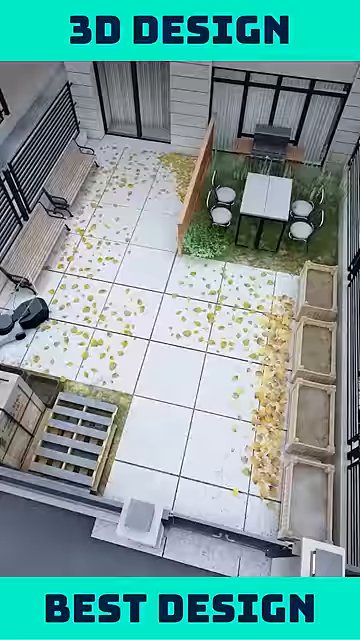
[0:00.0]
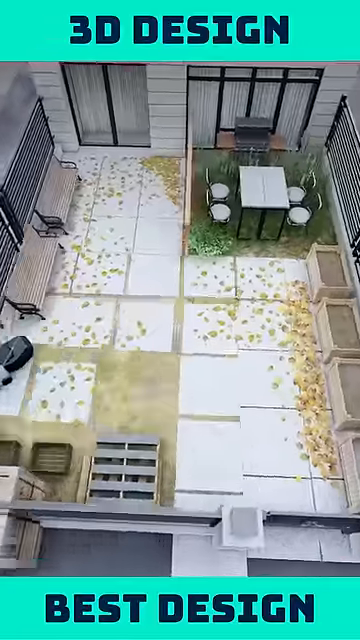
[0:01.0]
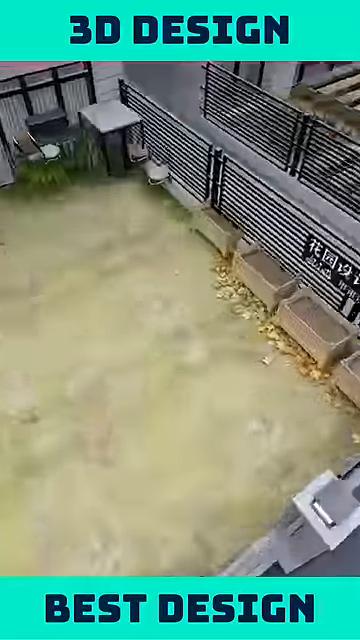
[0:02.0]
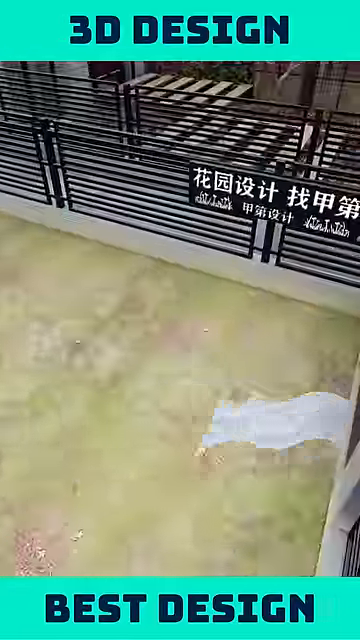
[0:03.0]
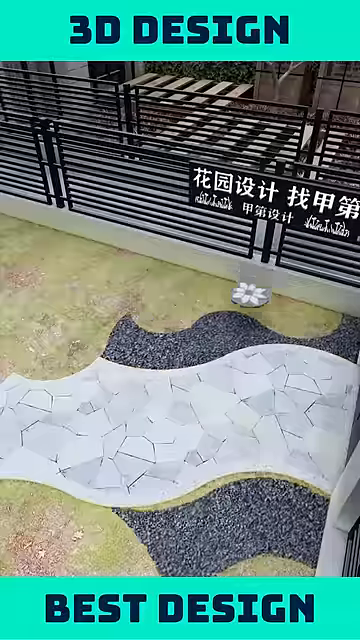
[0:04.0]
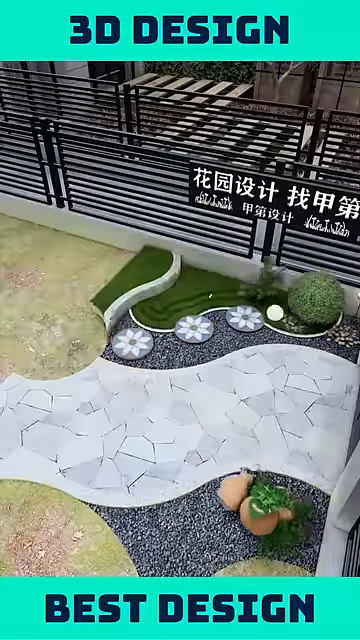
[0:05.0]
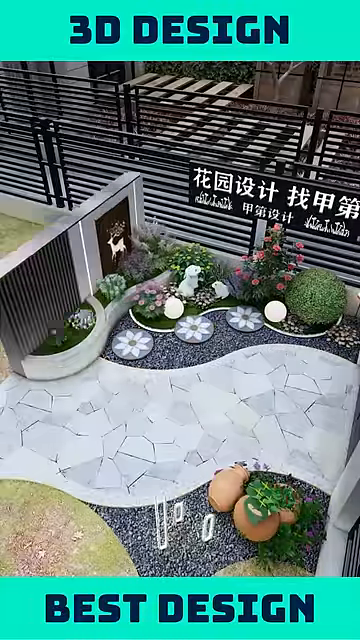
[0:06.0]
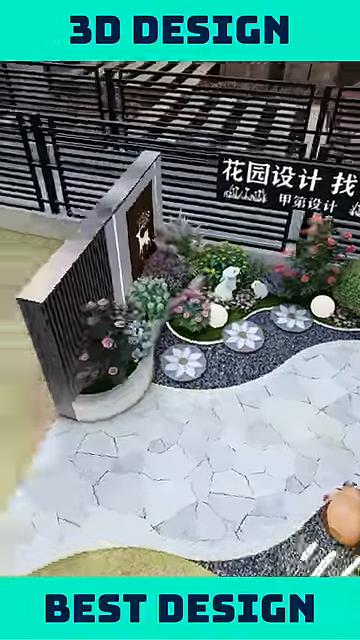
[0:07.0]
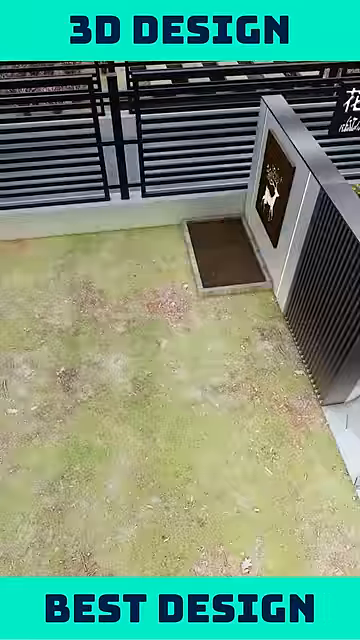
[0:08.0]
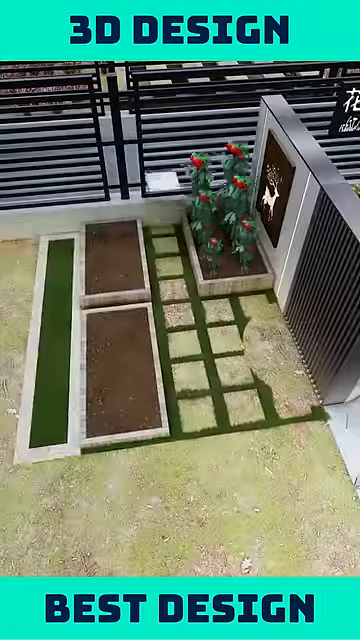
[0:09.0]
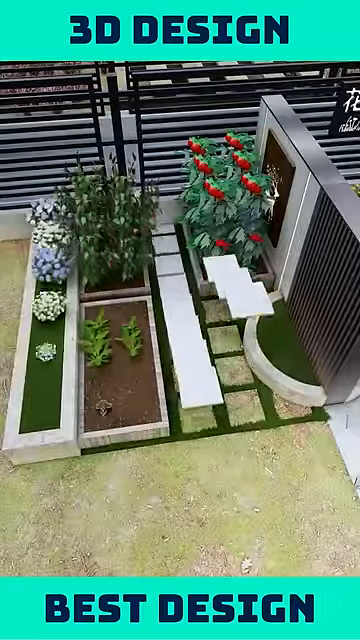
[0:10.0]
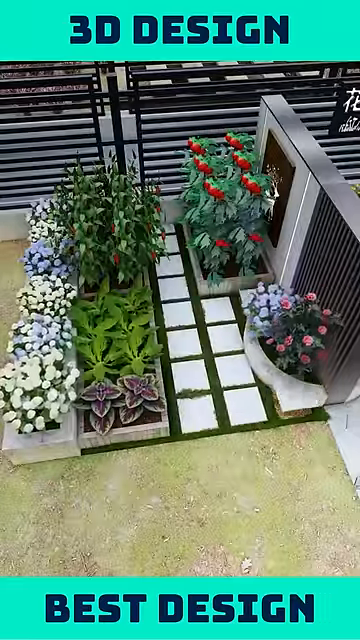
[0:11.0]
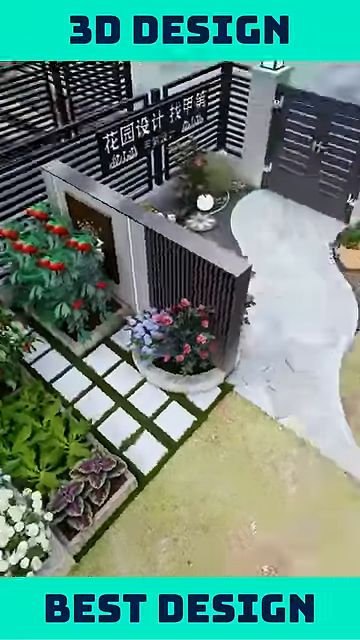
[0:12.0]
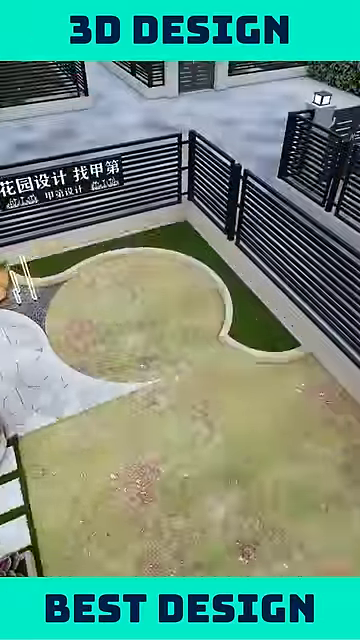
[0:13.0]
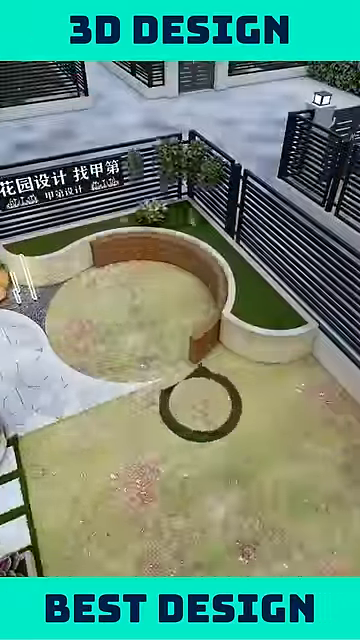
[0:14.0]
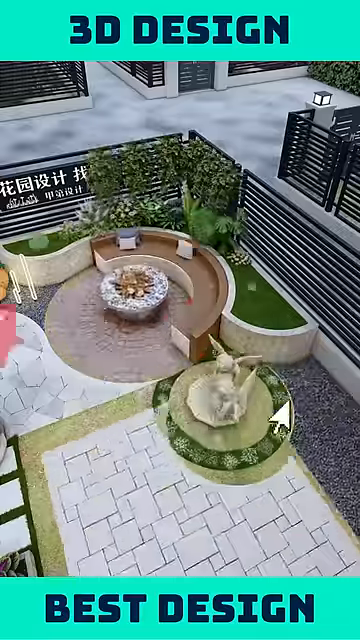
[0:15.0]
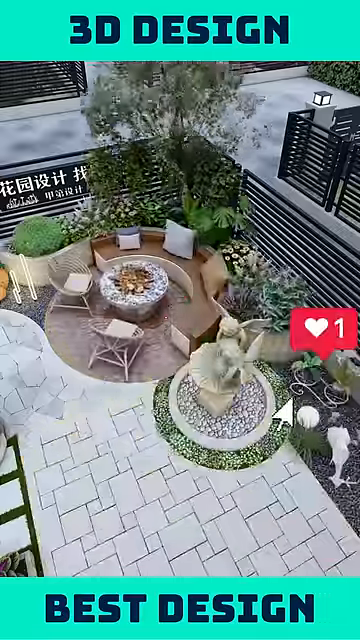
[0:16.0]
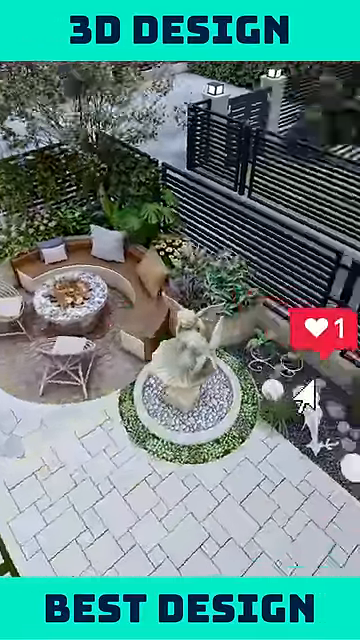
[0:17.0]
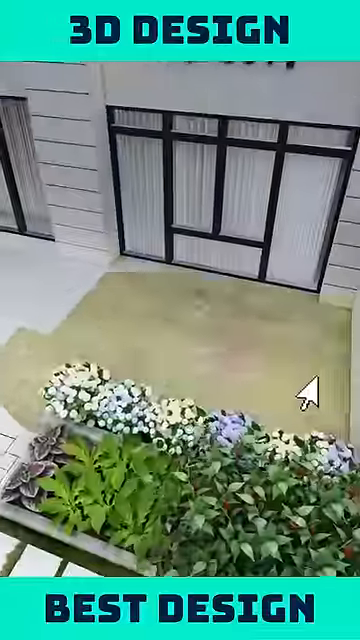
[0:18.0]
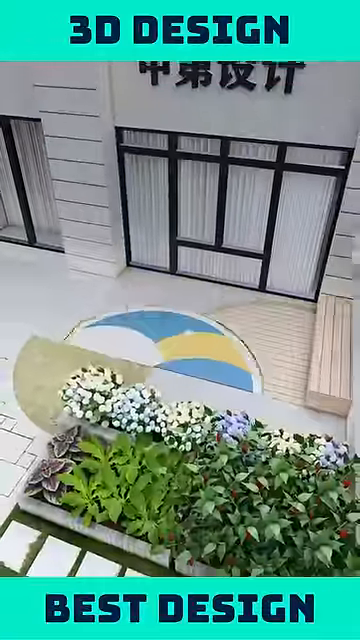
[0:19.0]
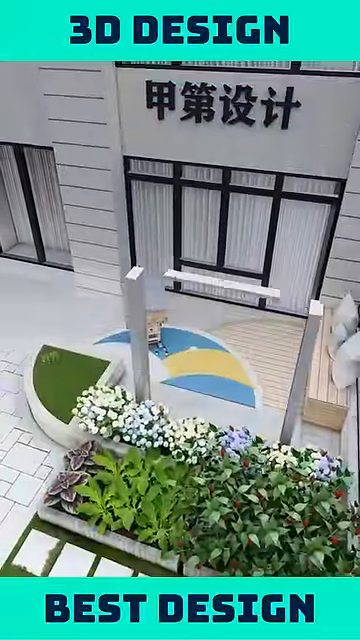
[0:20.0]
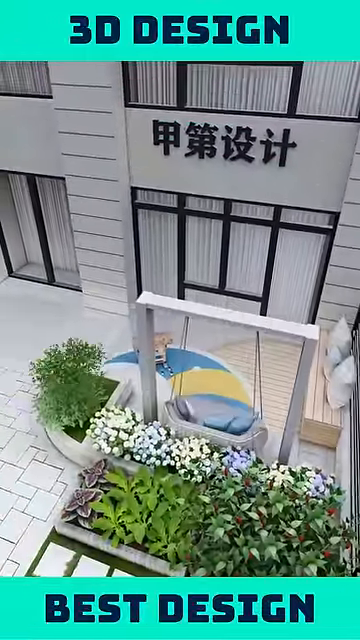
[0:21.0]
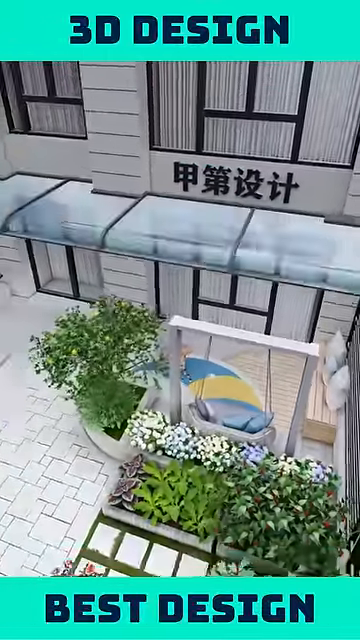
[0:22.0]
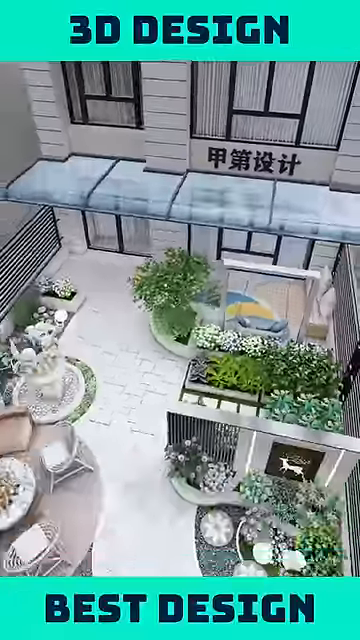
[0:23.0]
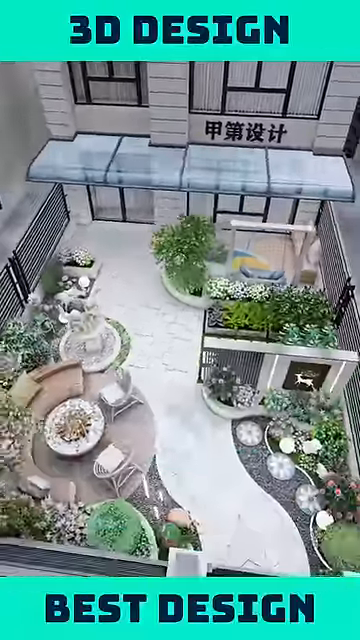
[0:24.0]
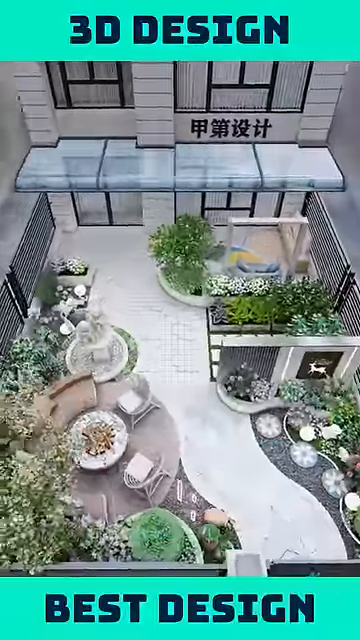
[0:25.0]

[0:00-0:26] A bar at the top of the frame reads "3D design" and a bar at the bottom says "Best Design." AI videos of garden improvements being done follow. Graphics show garden beds being planted, a walkway being installed, and garden beds being installed around the walkway. More flower beds appear, then a raised garden with seating and a fire pit, another seating area with a swing and a tree, and then an overhead roof awning. An AI design tool is being demonstrated, showing the different elements of a garden that could be designed and ultimately installed. At one point a like heart appears and then disappears. In the bottom corner there is a green graphic that says "Best Design" in a green square. There is writing on the house in the AI-generated graphic, written in Japanese or Chinese.